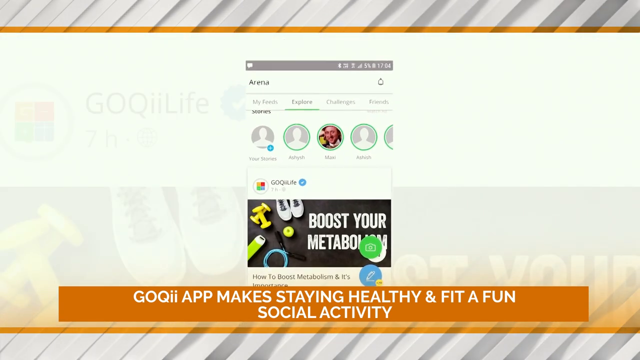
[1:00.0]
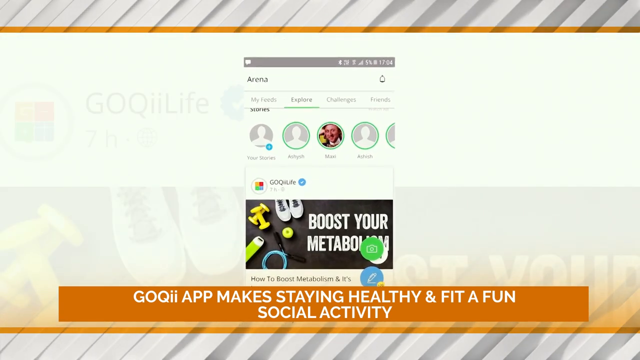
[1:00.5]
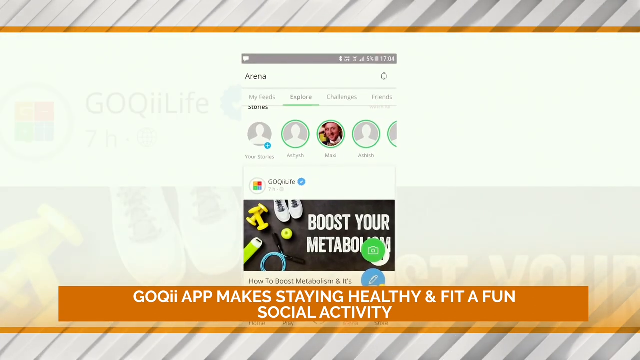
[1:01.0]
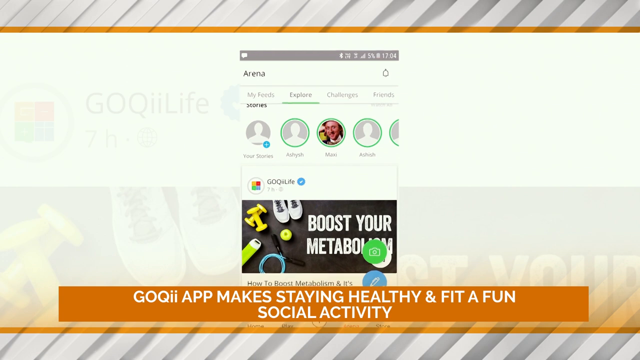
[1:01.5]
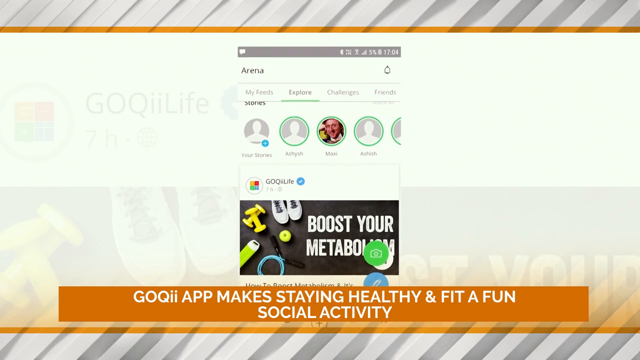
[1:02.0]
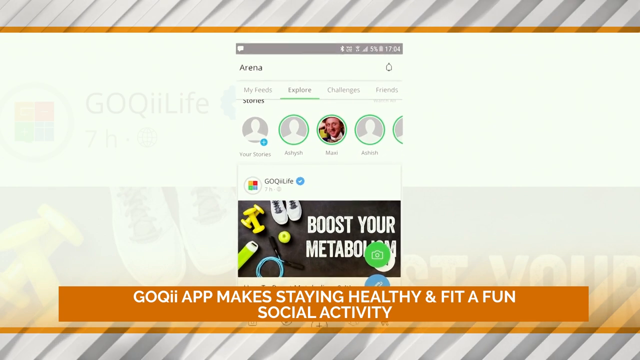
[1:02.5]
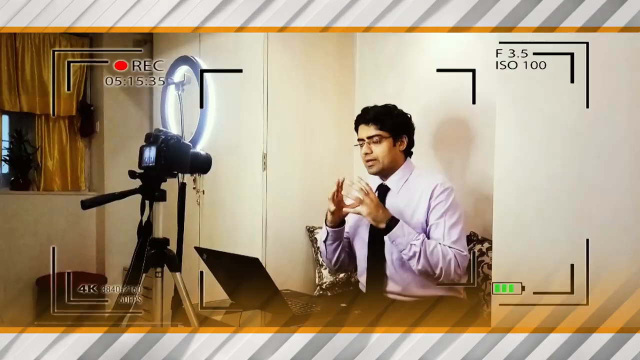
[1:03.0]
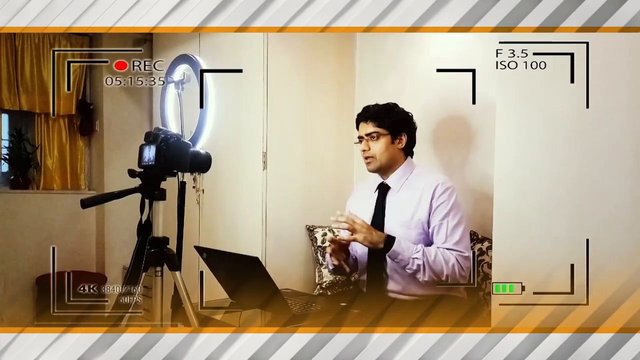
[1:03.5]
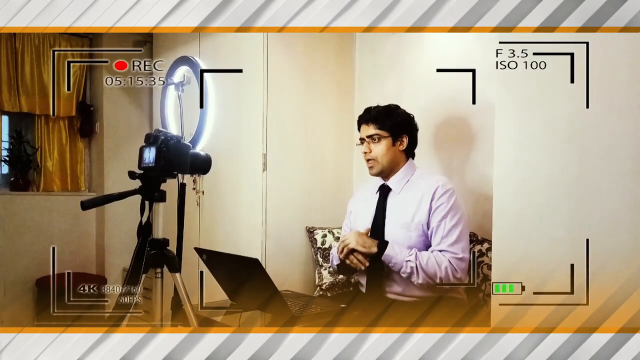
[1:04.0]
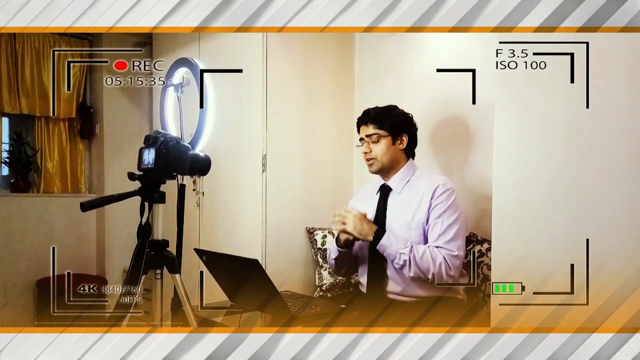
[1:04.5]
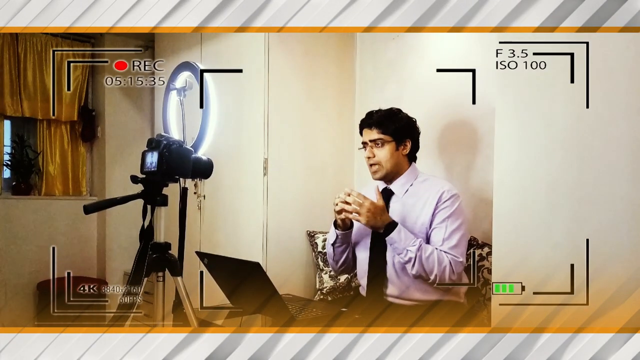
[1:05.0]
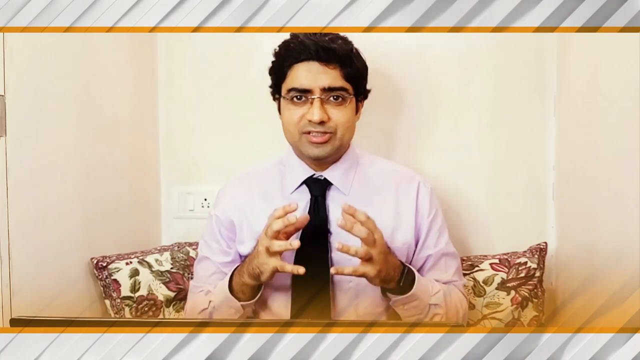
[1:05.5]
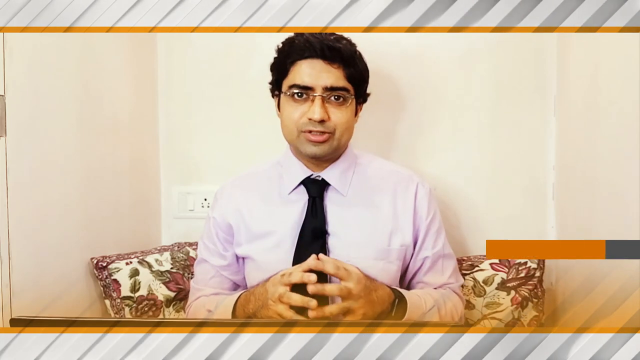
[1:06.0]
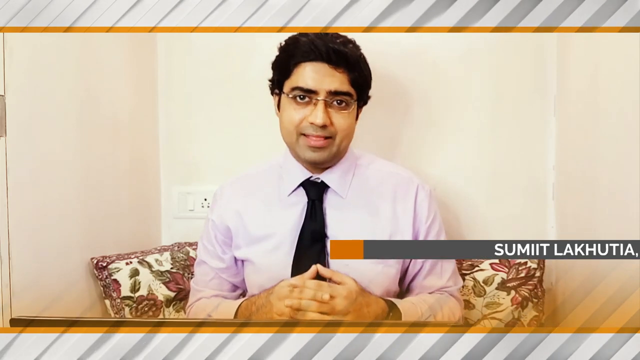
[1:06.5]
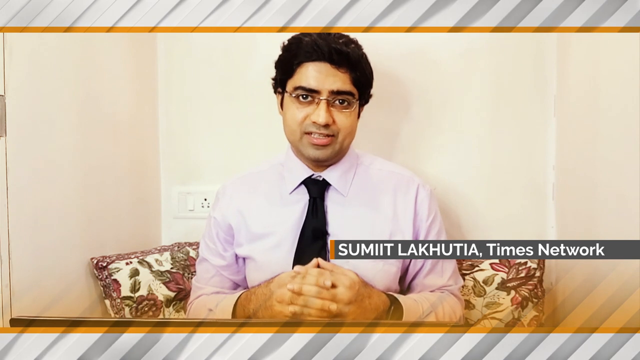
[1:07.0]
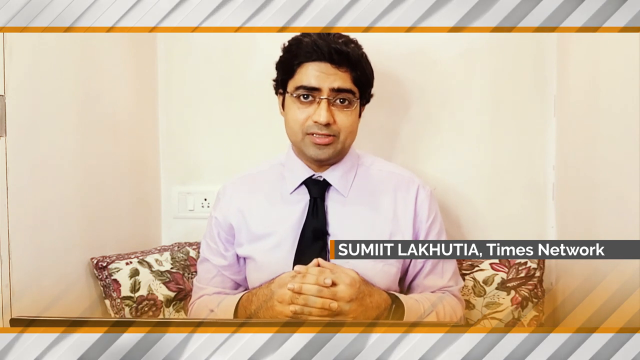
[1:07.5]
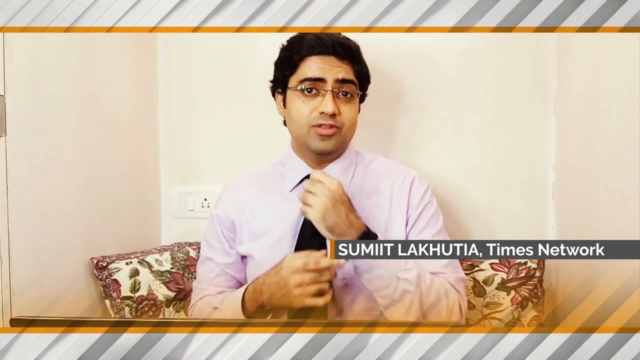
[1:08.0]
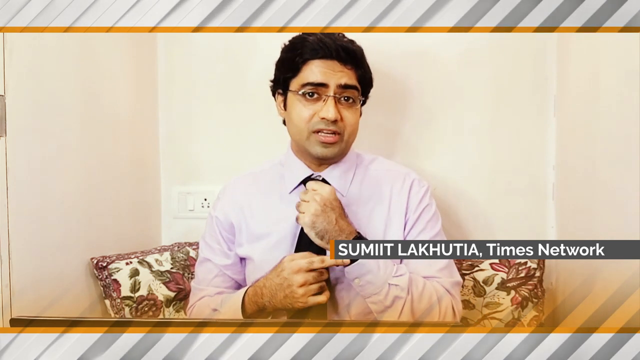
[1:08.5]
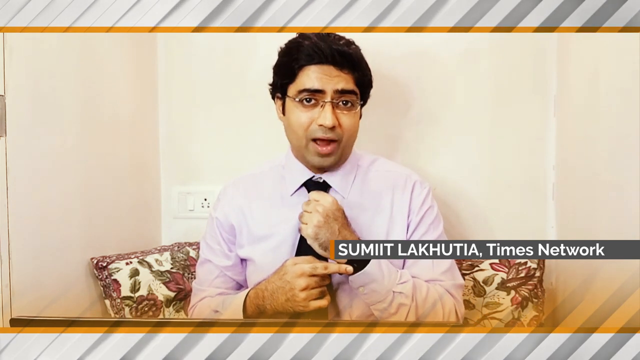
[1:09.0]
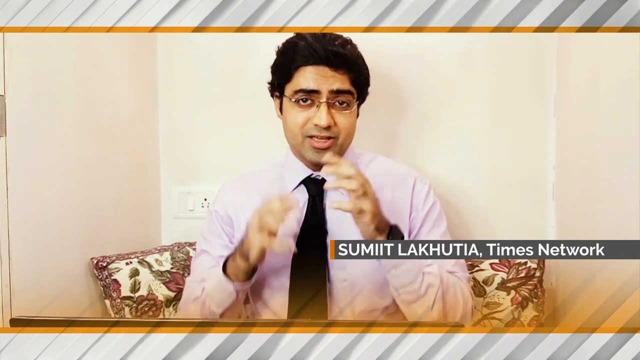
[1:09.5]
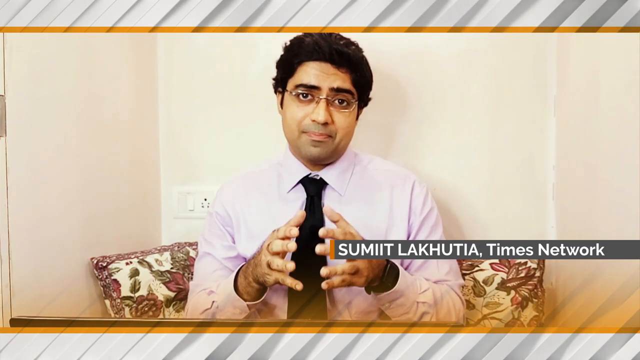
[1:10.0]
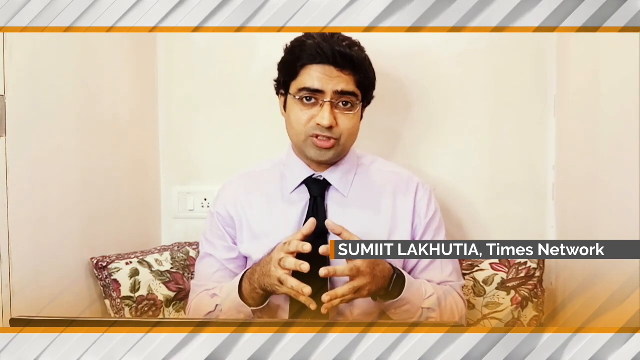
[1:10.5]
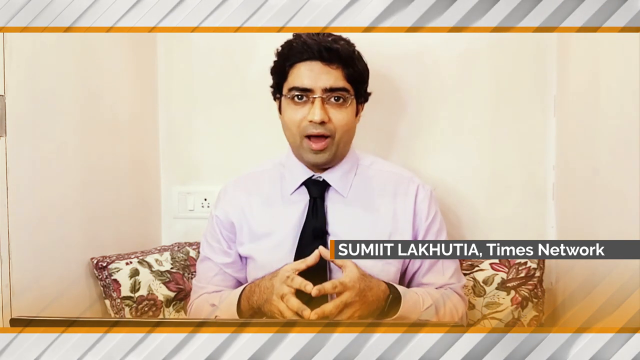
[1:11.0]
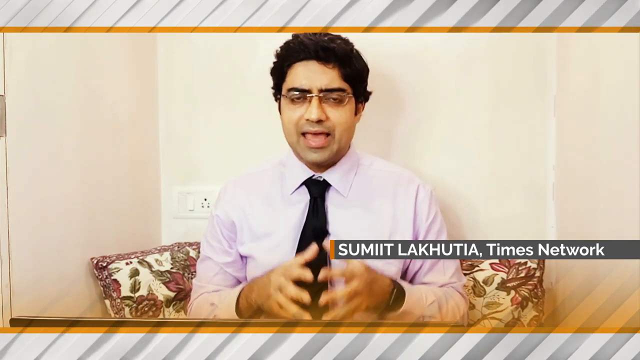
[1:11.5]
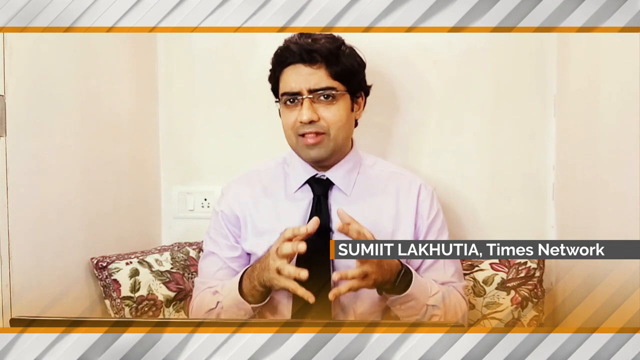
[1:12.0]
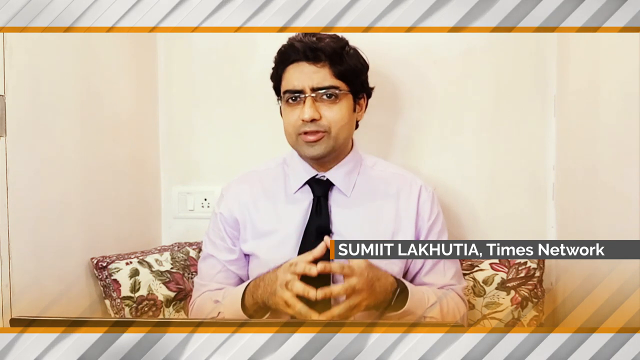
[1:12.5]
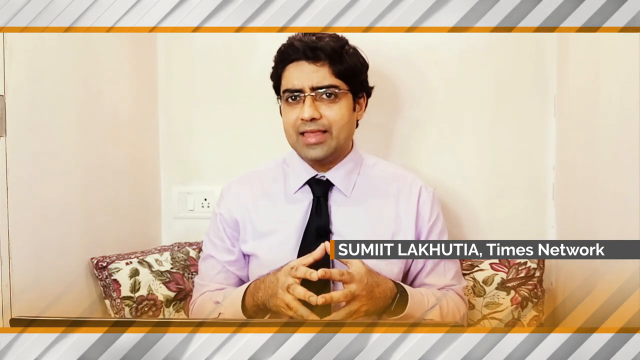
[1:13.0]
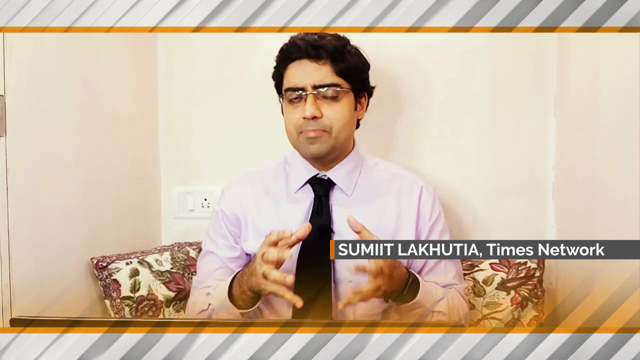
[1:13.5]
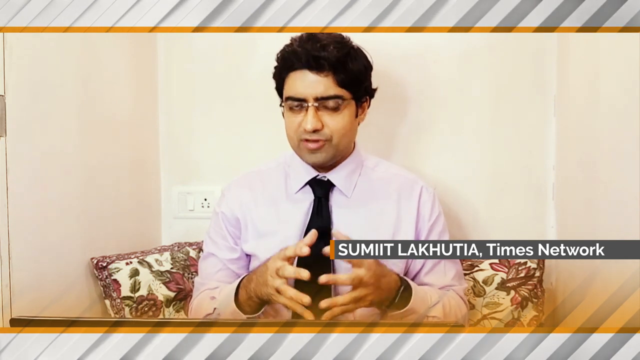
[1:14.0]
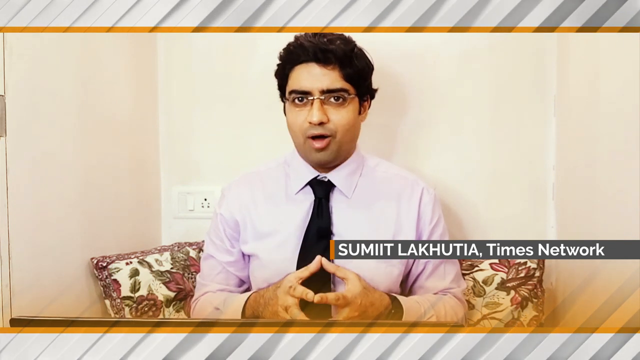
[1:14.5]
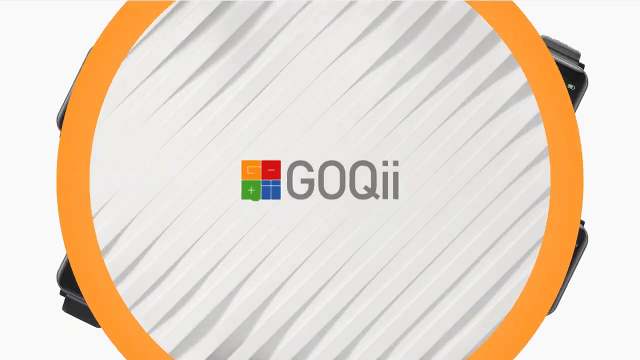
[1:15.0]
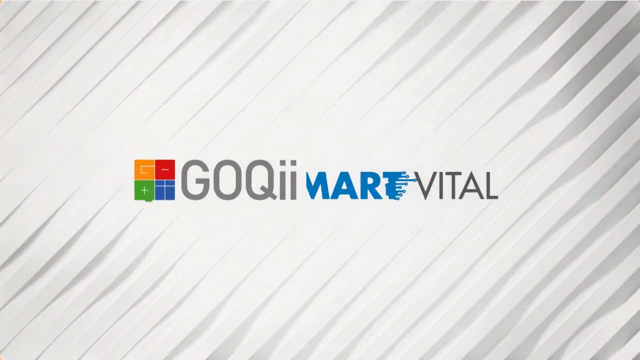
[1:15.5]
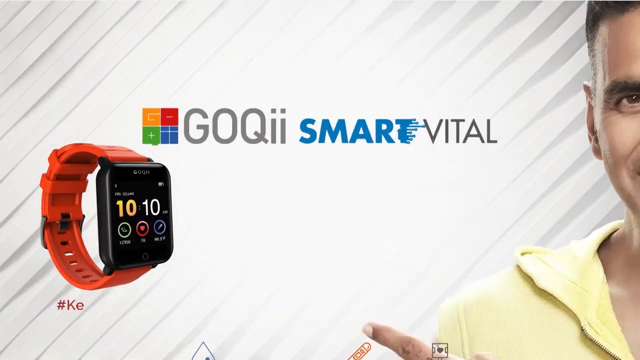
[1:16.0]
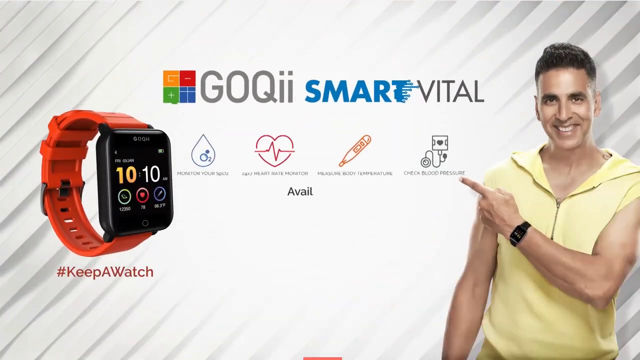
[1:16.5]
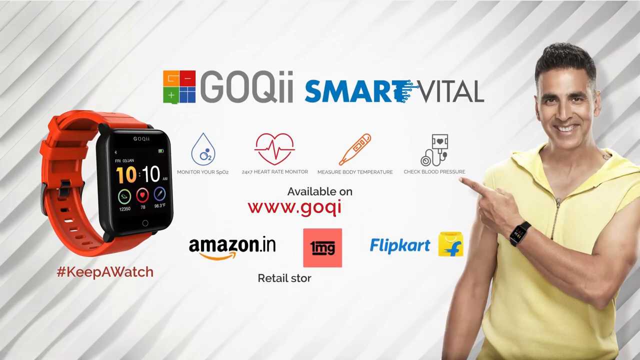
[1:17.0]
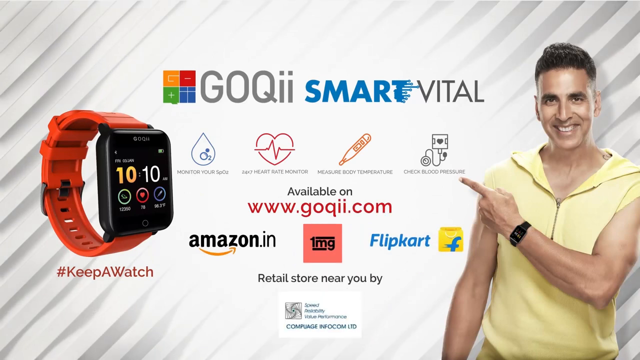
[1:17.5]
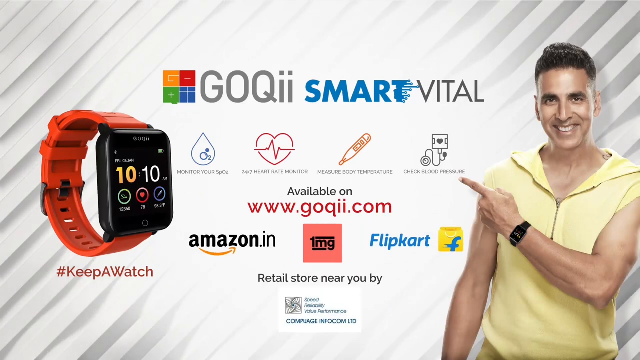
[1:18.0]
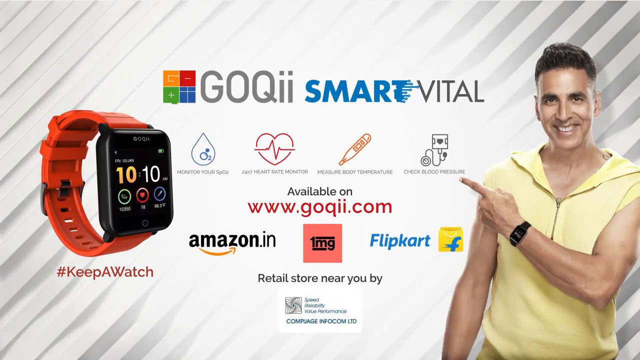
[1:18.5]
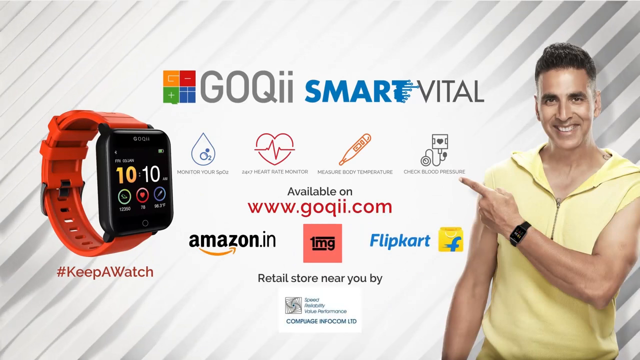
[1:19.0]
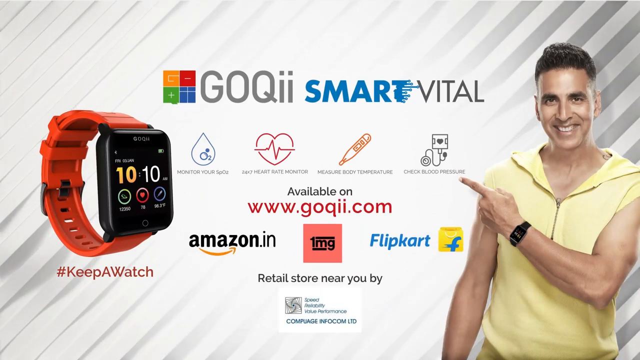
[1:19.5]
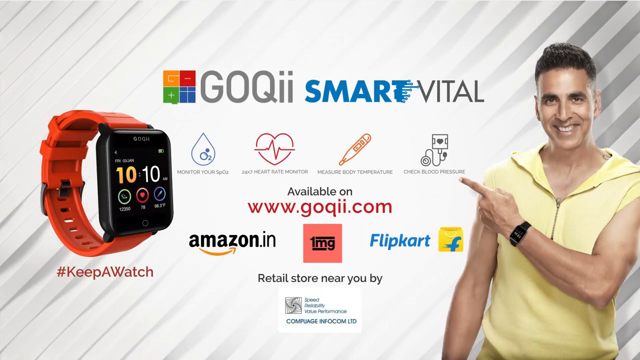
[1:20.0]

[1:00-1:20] The ad for the GOQII Smart Vital fitness watch, a health monitoring system for 5,999 rupees, continues with "boost your metabolism," possibly a feature for sharing information with others. Sumit Lakhotia is then shown being interviewed, with a ring light and a camera. He is in what looks like a little alcove with pillows, next to an almira, or possibly two almiras (wardrobes), and he talks to the camera as his name appears on screen: "Sumit Lakhotia Times Network." The video ends on an ad card for "GOQII Smart Vital," "available on www.goki.com."